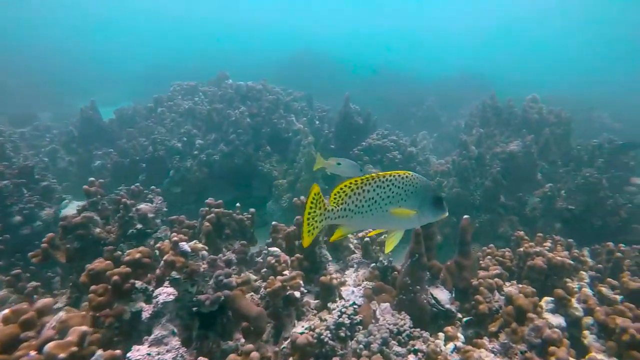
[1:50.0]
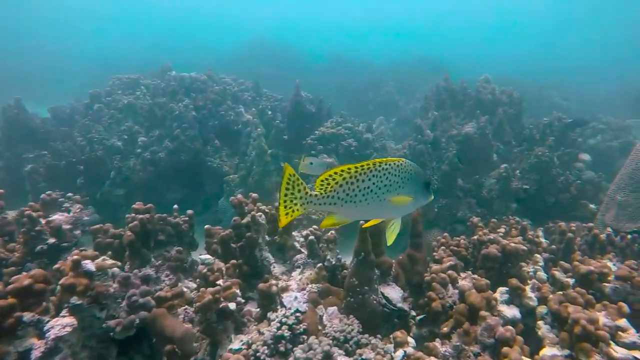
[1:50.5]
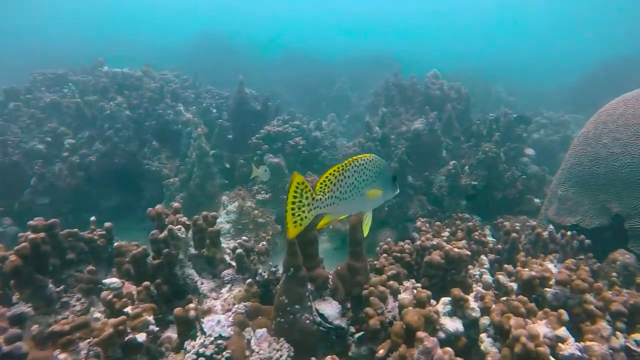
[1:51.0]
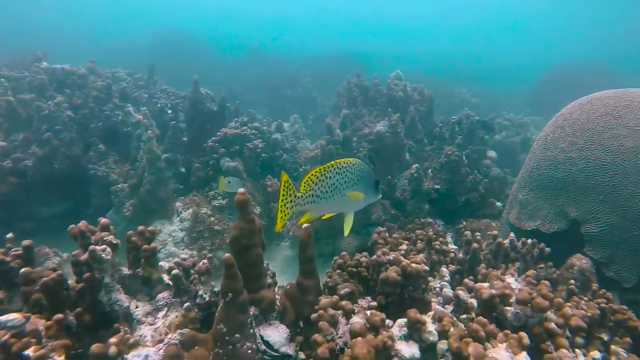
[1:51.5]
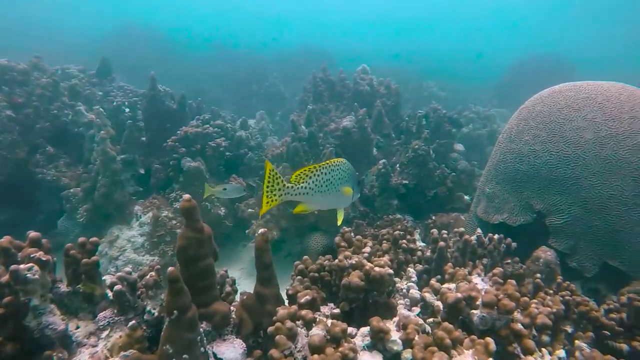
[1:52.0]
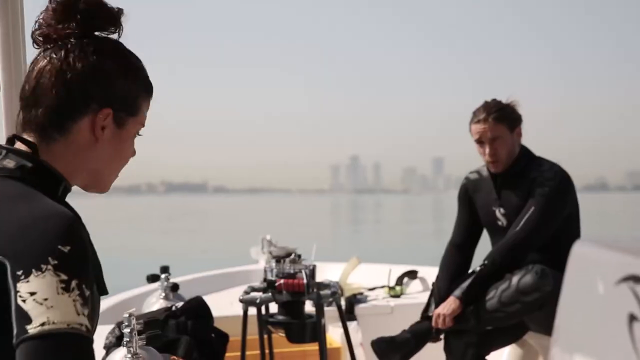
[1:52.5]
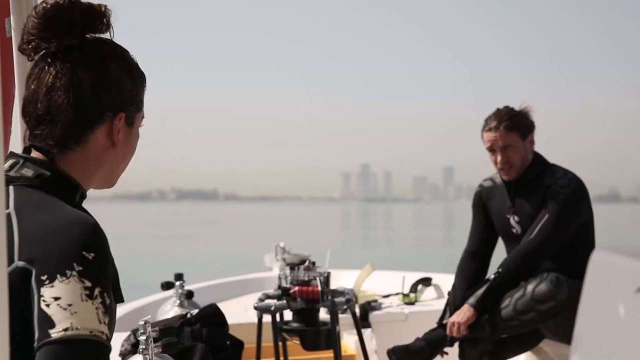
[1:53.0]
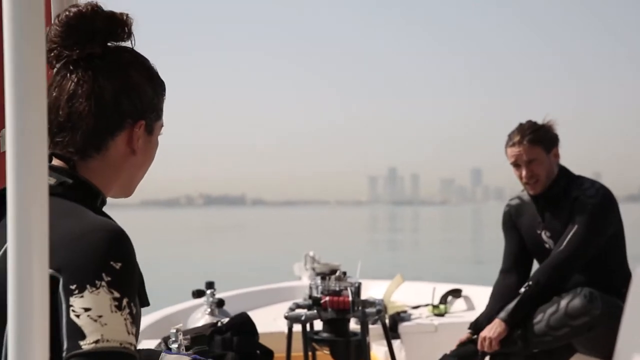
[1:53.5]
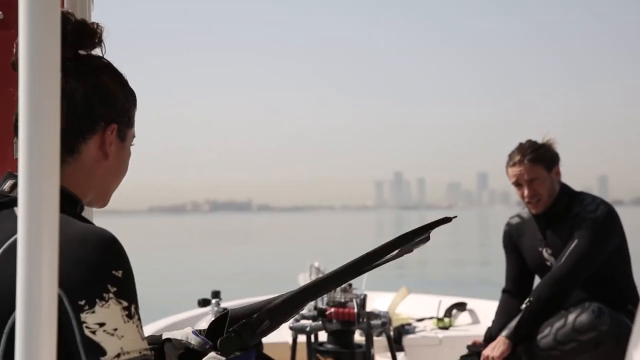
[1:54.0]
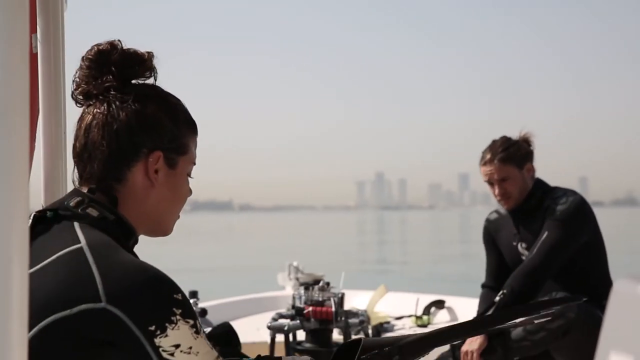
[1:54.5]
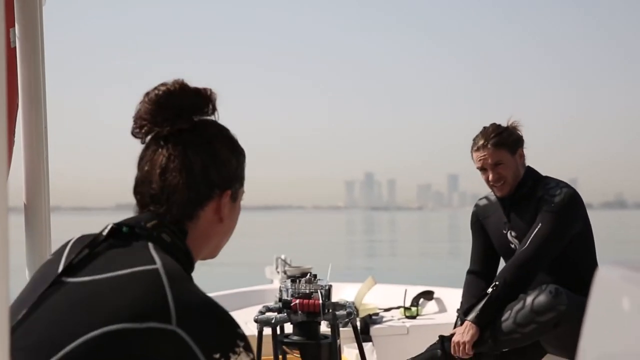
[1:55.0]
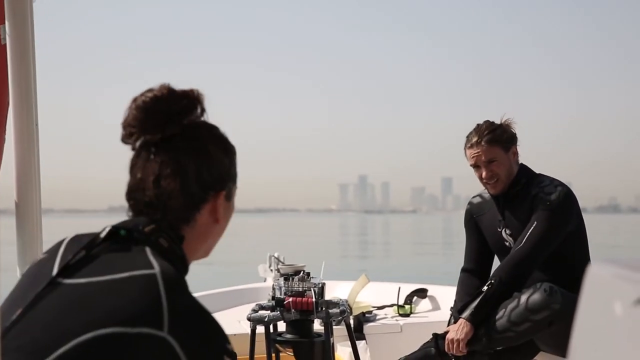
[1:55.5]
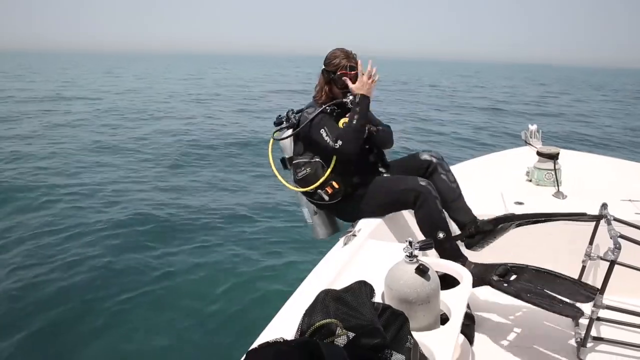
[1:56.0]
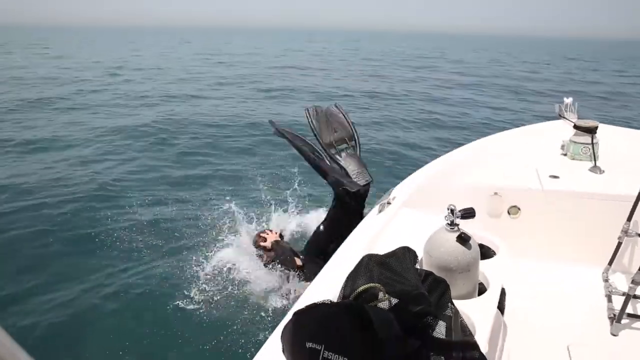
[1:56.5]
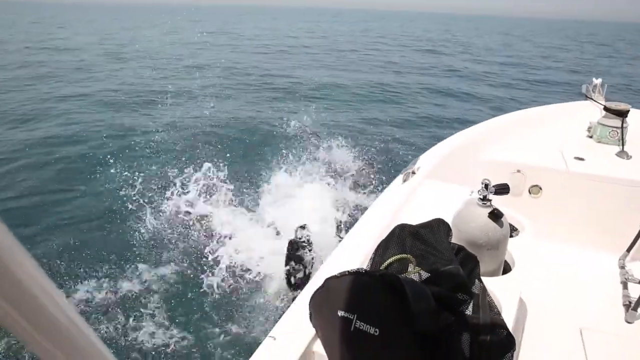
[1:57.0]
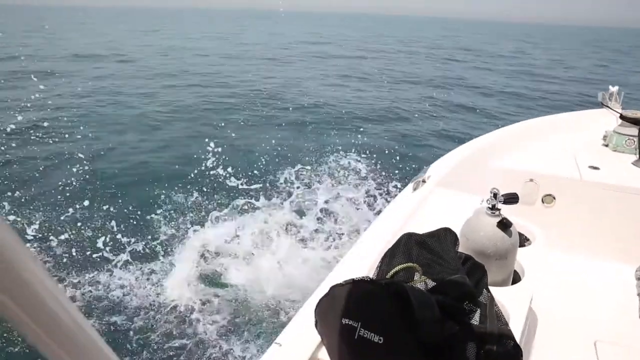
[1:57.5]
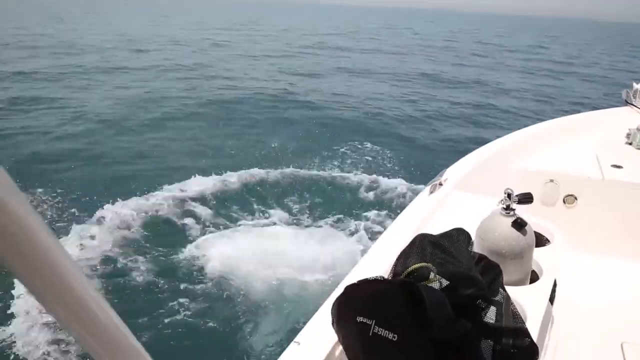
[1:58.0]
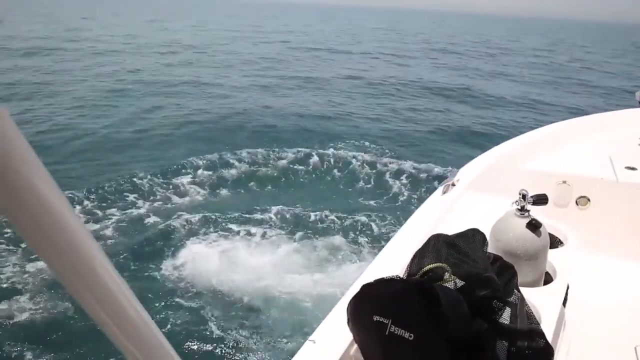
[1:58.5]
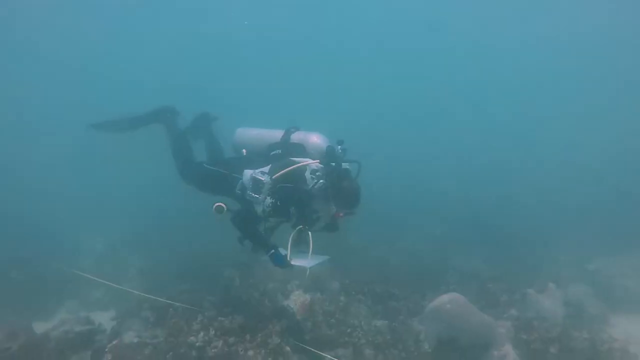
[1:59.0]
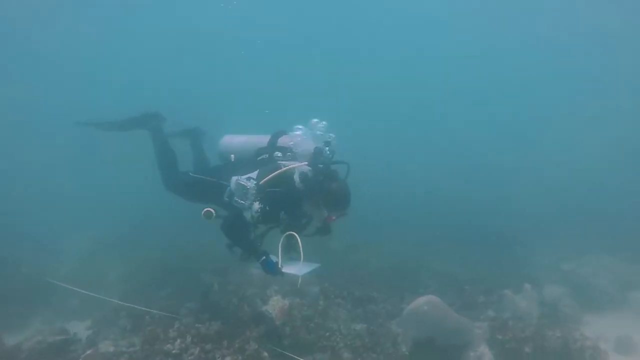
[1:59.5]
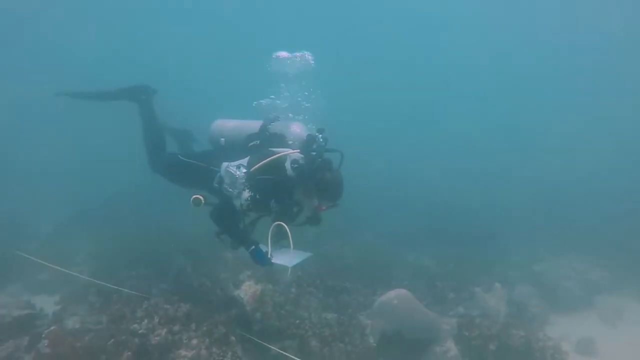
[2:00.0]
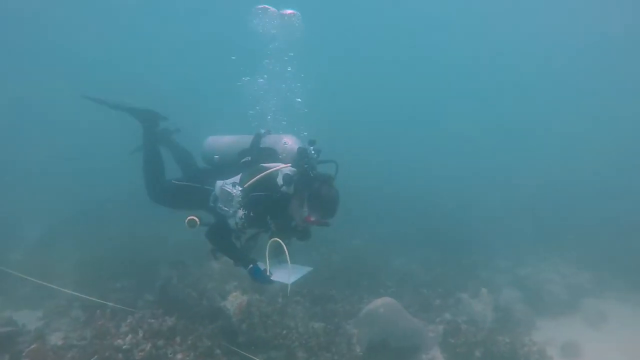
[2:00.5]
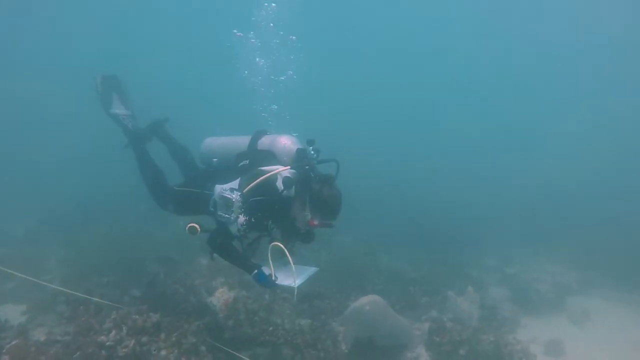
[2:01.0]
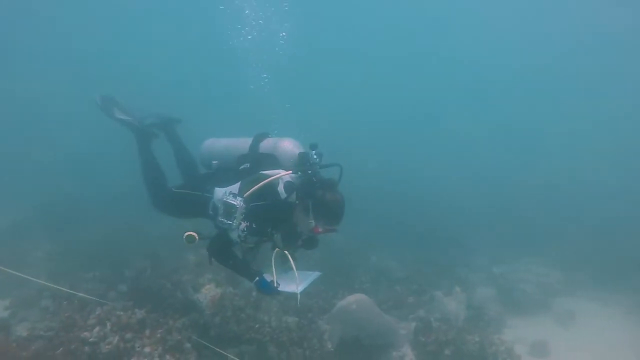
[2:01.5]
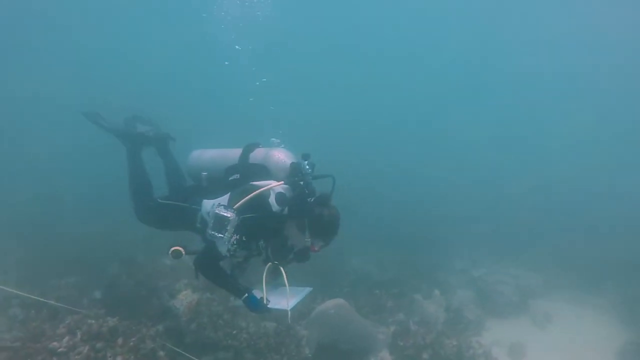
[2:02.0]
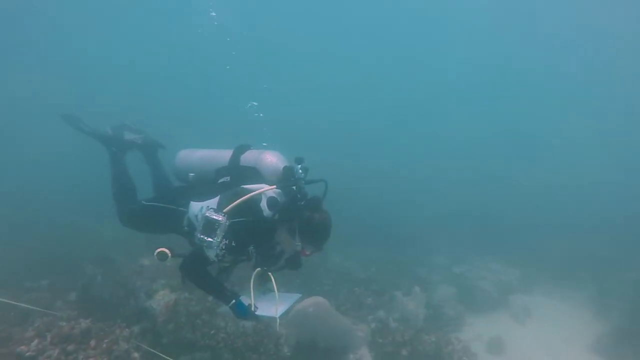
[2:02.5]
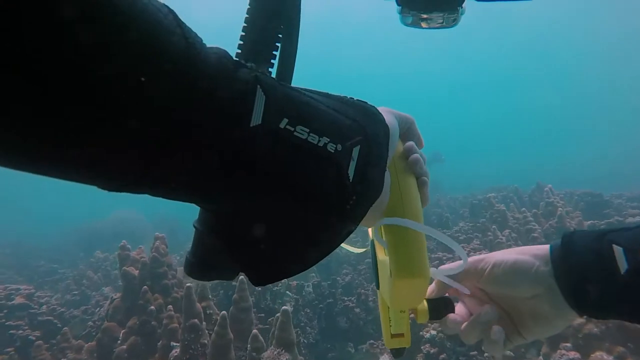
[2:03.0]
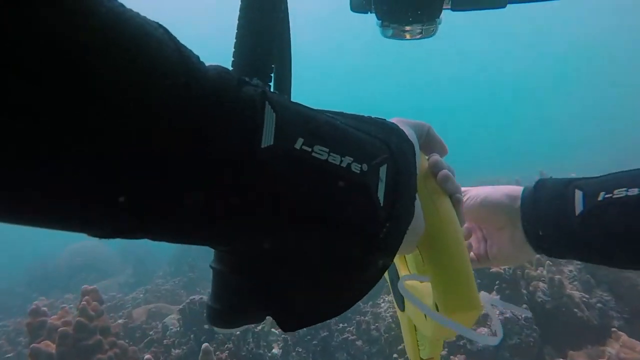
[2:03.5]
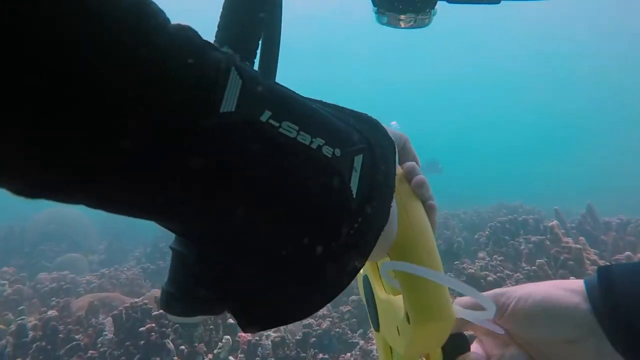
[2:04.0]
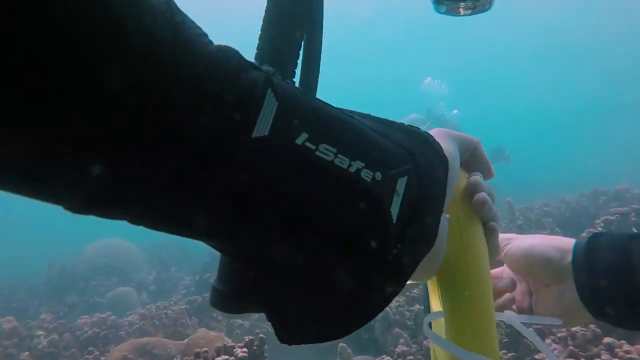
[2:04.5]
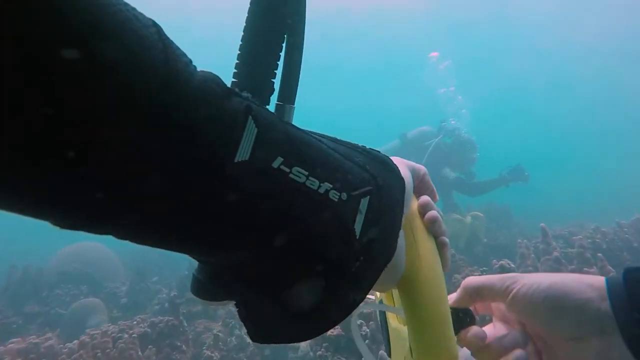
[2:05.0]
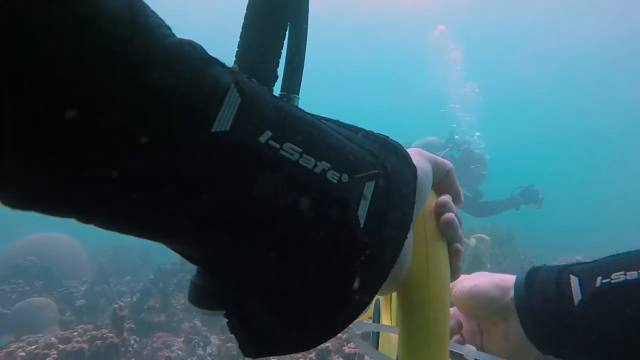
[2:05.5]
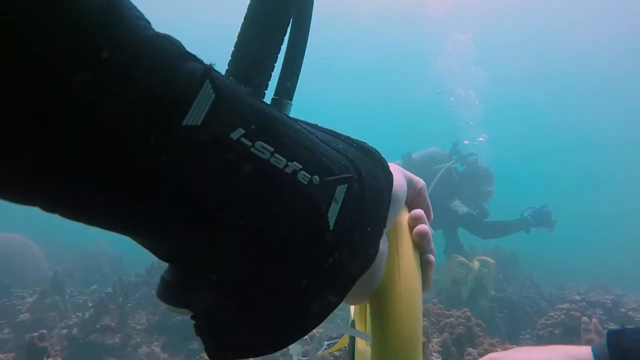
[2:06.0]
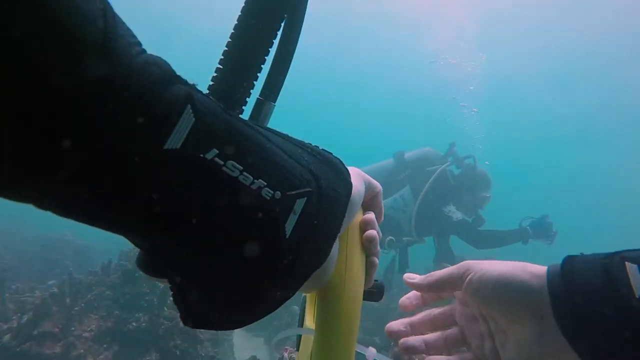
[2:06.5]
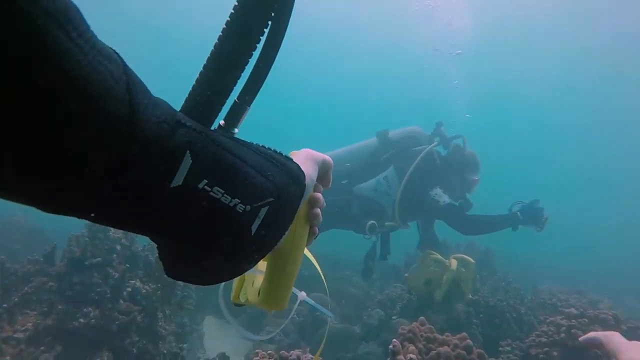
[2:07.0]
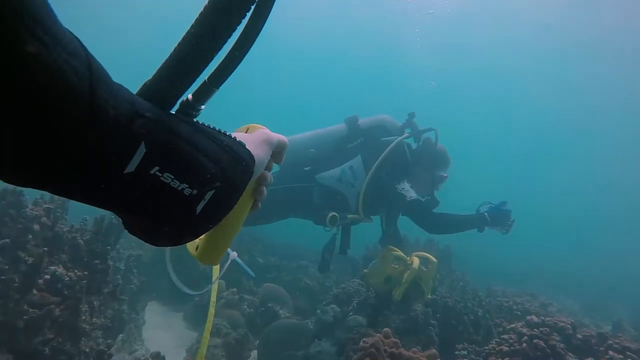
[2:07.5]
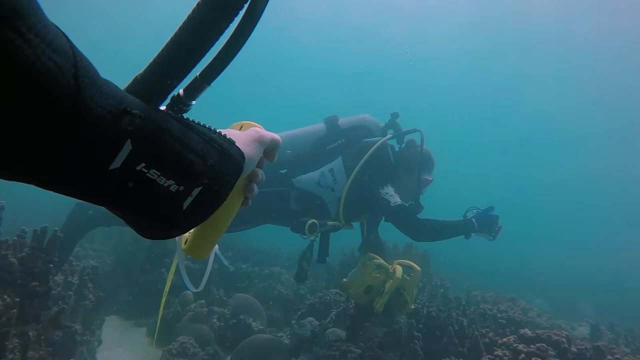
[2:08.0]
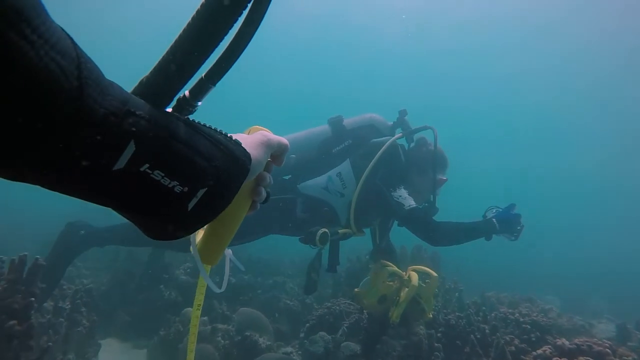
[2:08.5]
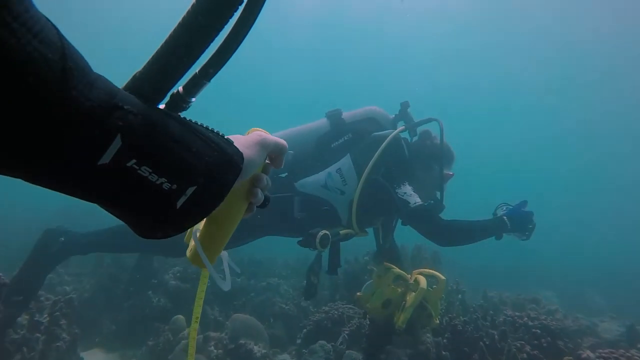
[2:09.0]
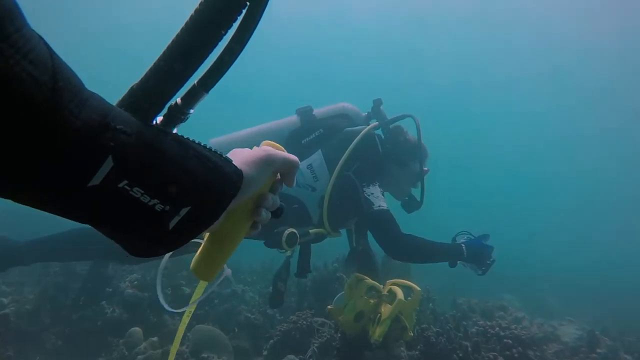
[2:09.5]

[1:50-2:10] The camera follows the gray spotted fish with neon yellow fins. Then the woman and the man from the boat are shown sitting on the boat in their scuba gear with their heads visible, kind of talking with each other. Some scuba gear is visible in the boat. One of them dives backwards from the edge of the boat into the ocean, their flippers visible as they go in. A shot follows of them swimming in the water, which is very murky, a clear blue-green murkiness rather than dirty. The swimmer holds something yellow in their hand and makes a winding motion with it; there also seem to be some white strips on it. The camera is angled as if the swimmer has a body camera on, and another scuba diver is visible in the shot.